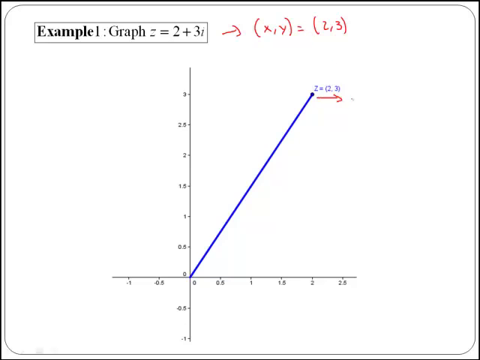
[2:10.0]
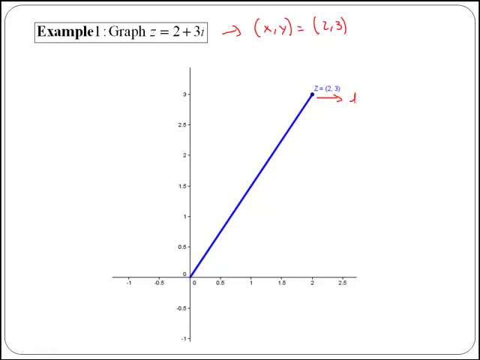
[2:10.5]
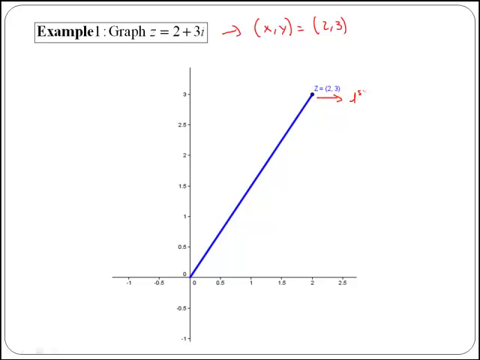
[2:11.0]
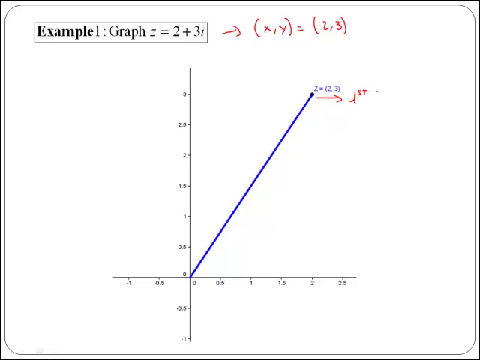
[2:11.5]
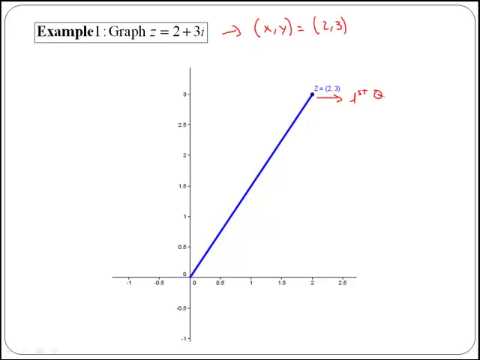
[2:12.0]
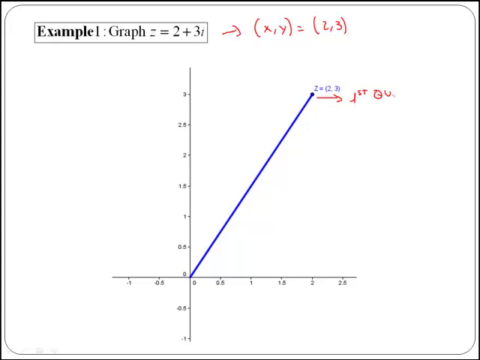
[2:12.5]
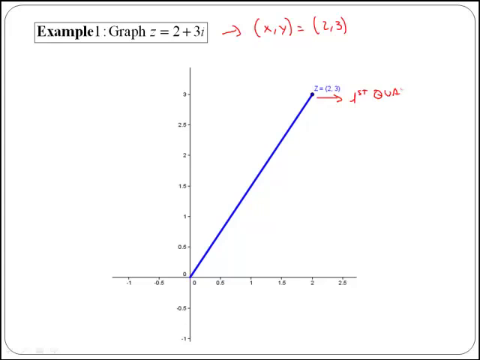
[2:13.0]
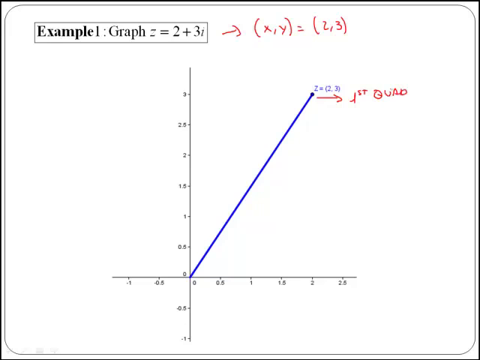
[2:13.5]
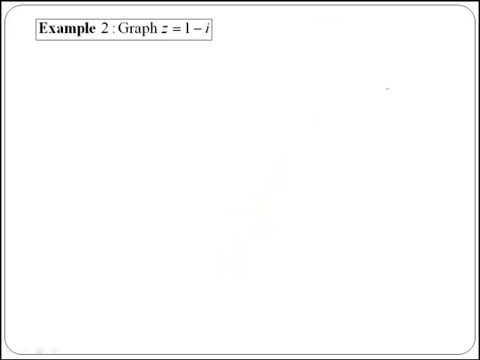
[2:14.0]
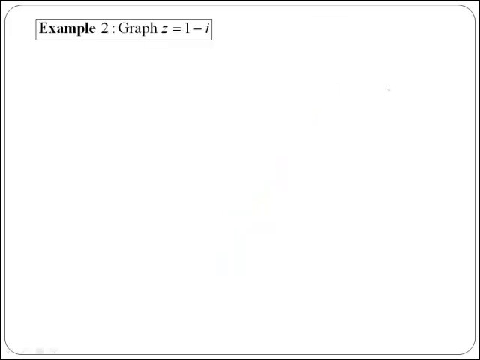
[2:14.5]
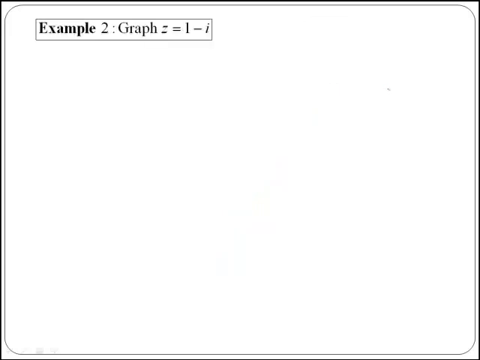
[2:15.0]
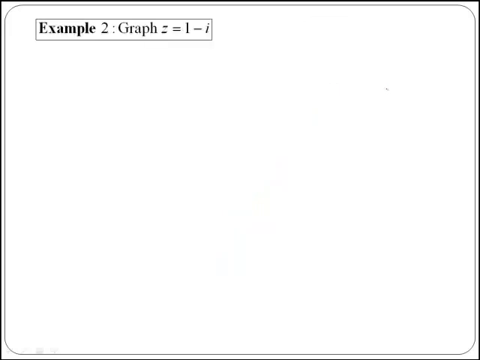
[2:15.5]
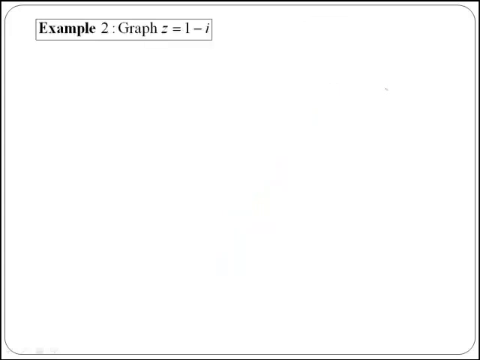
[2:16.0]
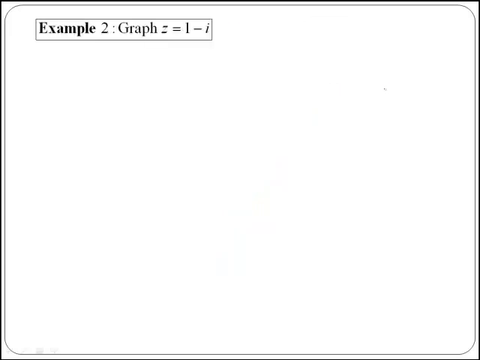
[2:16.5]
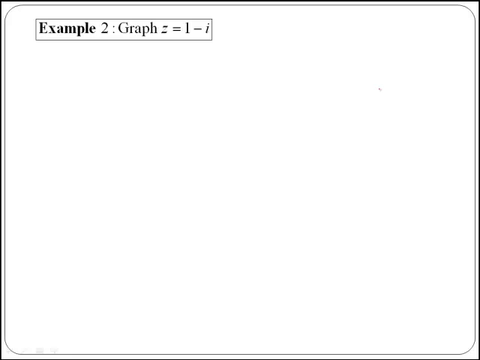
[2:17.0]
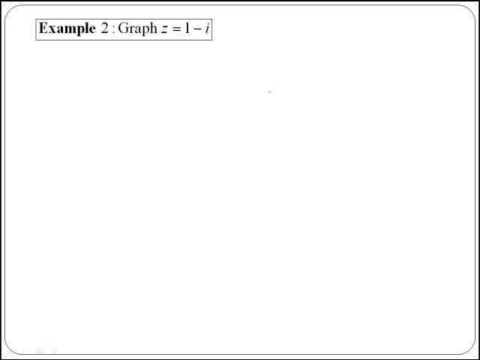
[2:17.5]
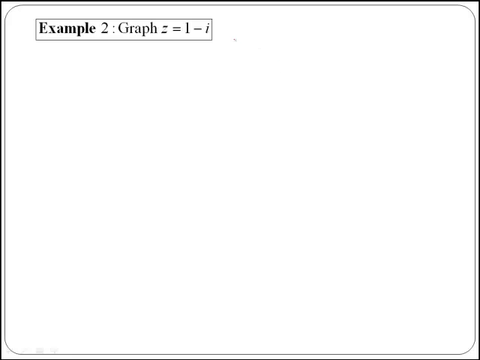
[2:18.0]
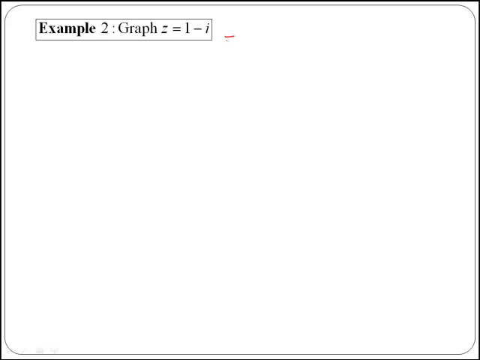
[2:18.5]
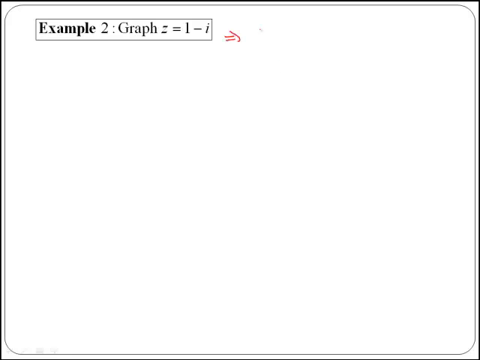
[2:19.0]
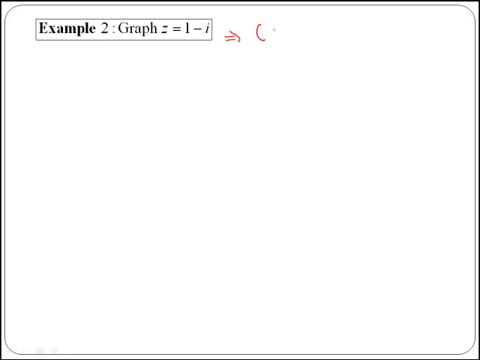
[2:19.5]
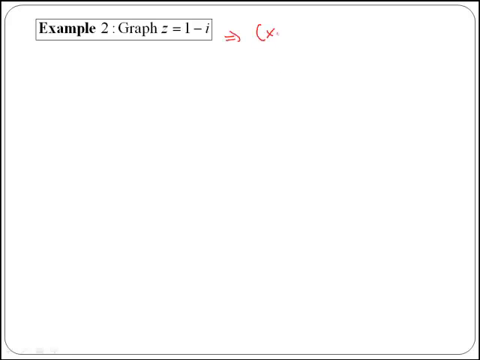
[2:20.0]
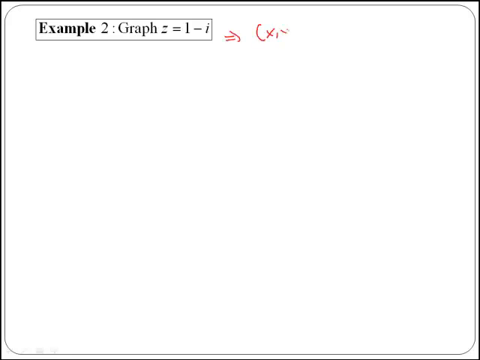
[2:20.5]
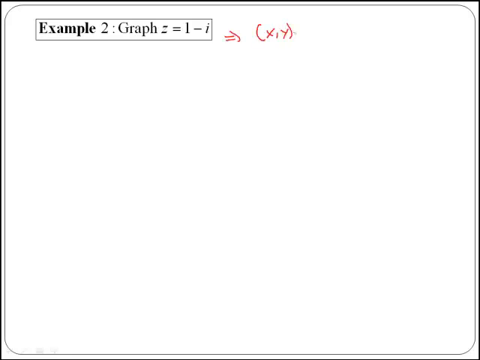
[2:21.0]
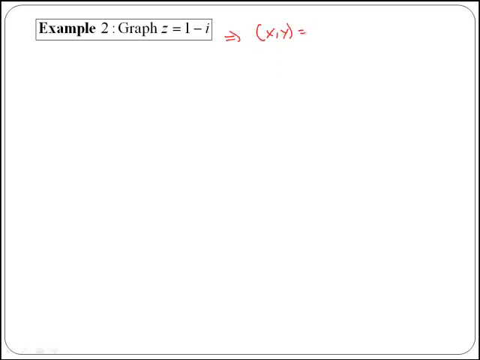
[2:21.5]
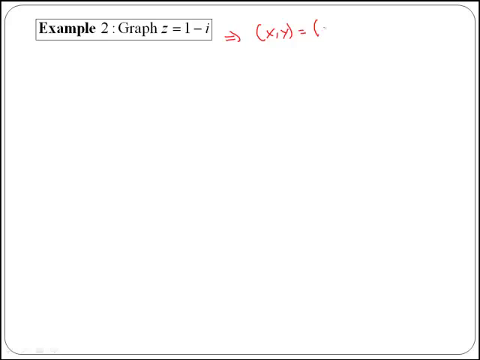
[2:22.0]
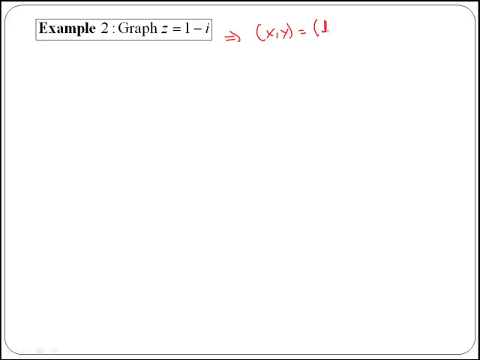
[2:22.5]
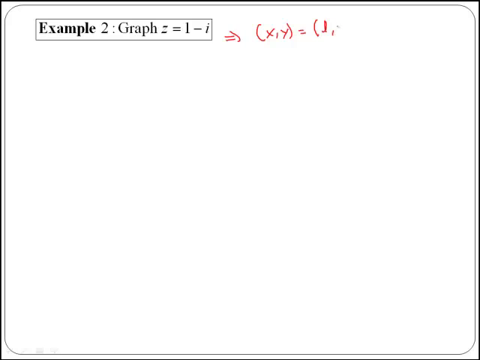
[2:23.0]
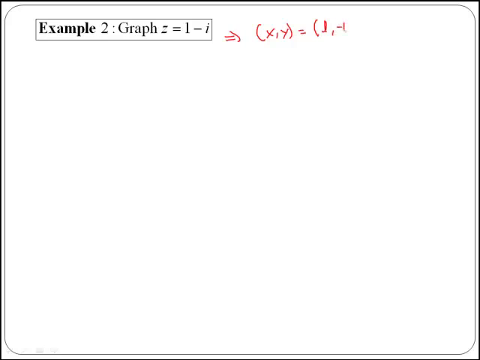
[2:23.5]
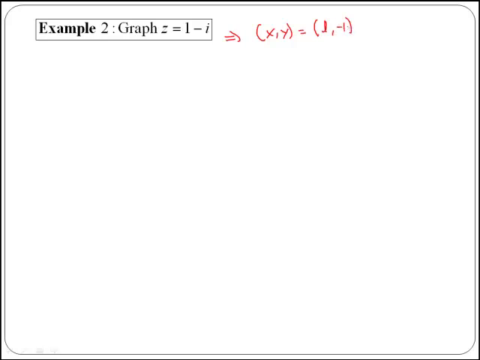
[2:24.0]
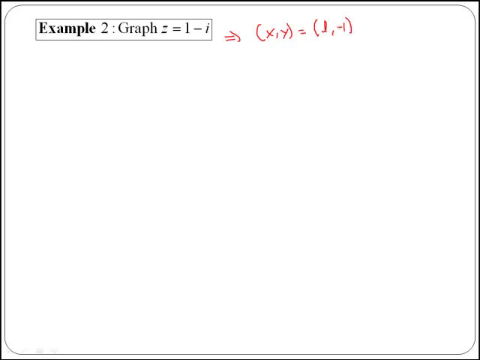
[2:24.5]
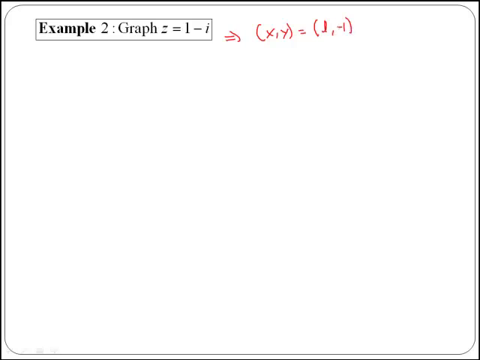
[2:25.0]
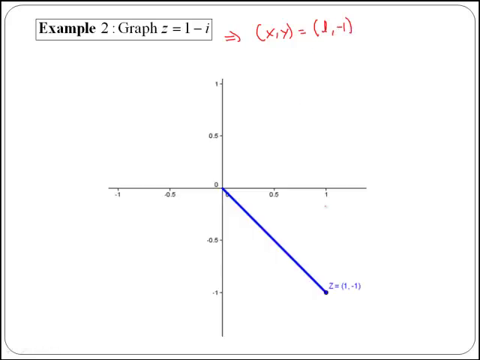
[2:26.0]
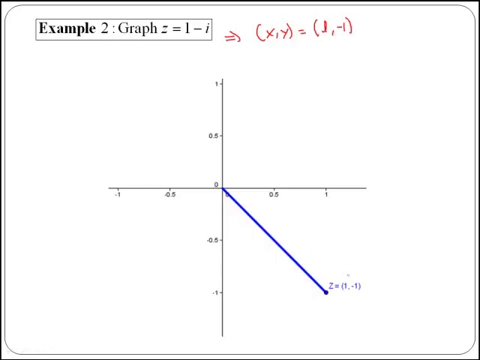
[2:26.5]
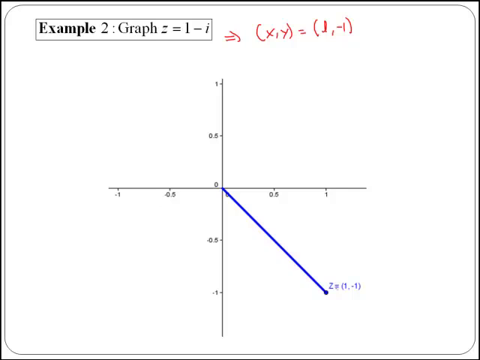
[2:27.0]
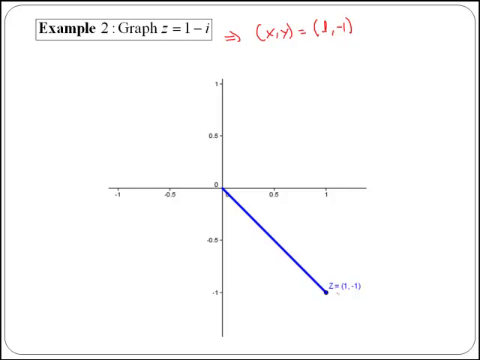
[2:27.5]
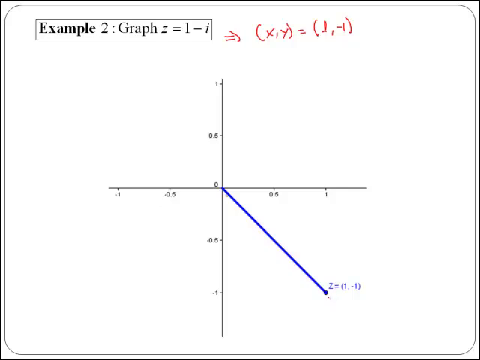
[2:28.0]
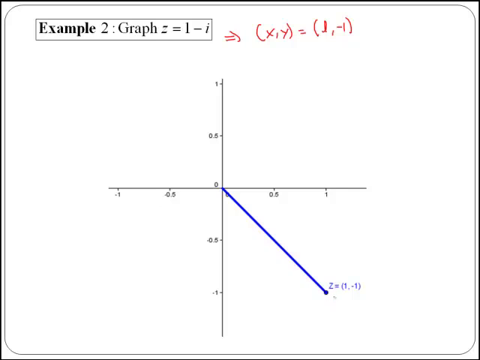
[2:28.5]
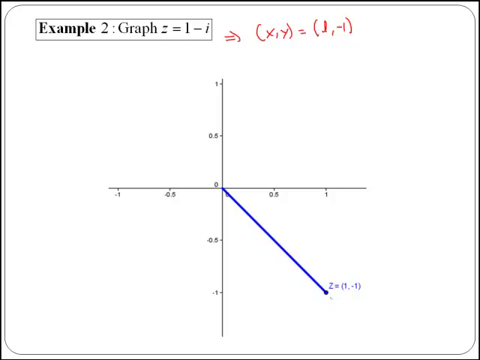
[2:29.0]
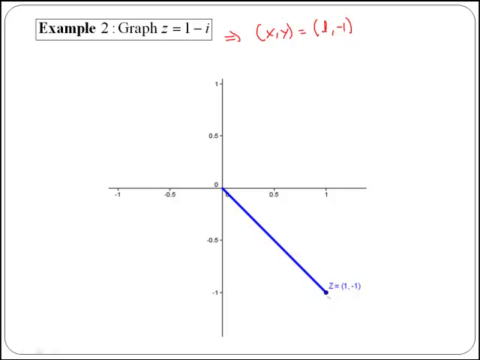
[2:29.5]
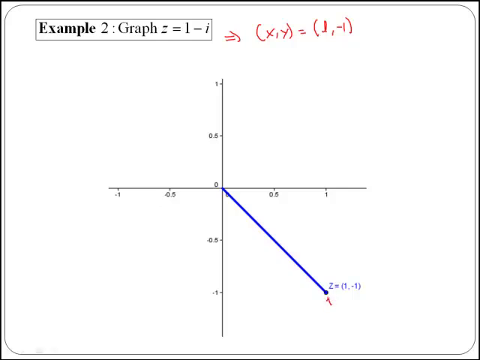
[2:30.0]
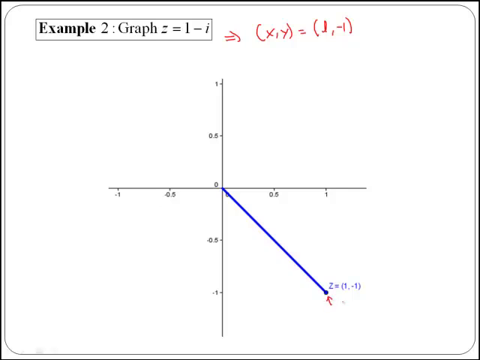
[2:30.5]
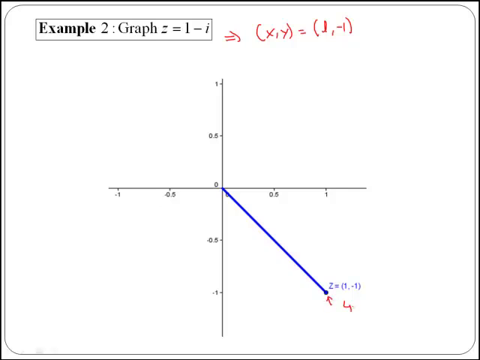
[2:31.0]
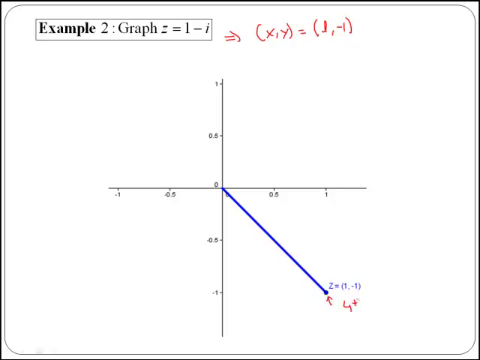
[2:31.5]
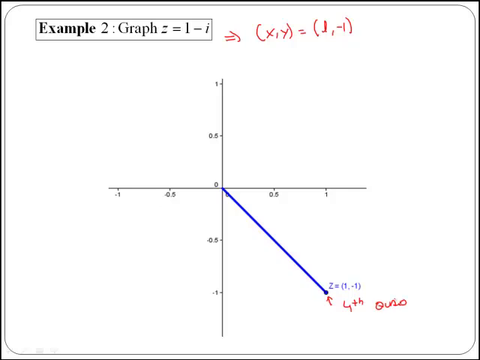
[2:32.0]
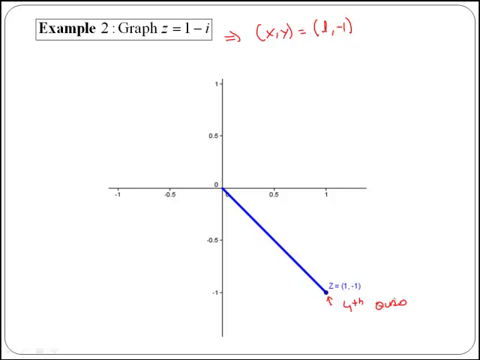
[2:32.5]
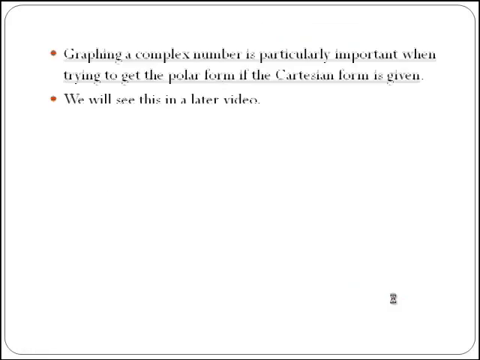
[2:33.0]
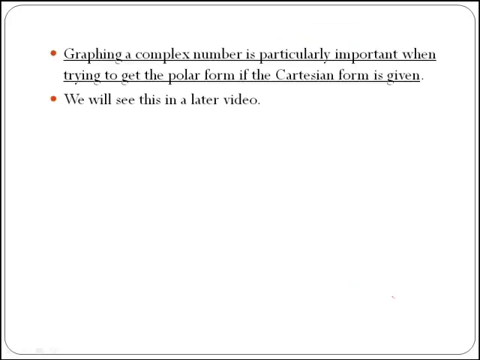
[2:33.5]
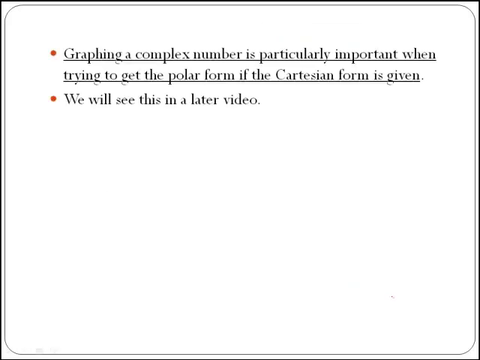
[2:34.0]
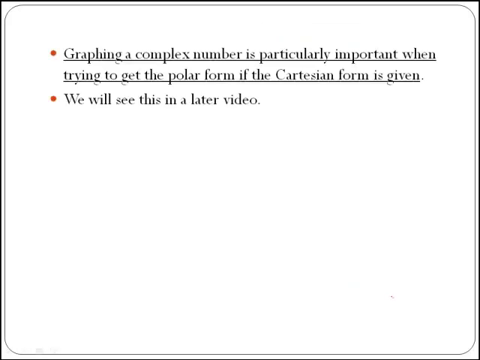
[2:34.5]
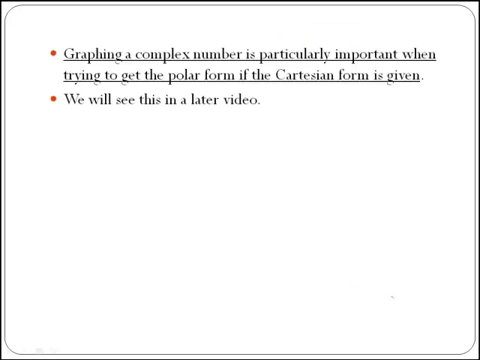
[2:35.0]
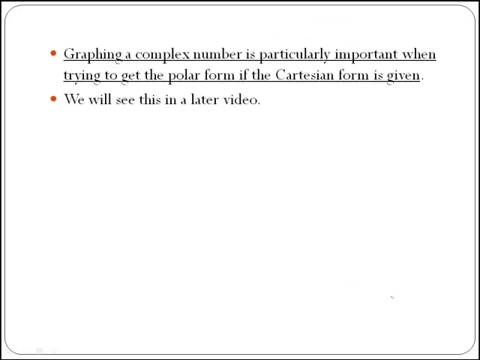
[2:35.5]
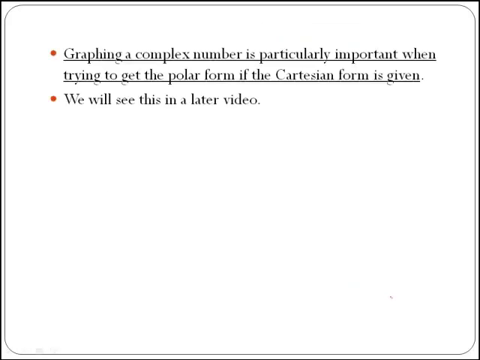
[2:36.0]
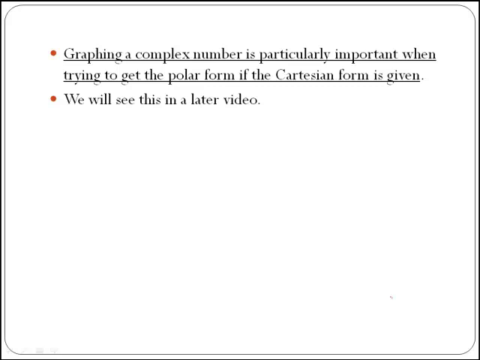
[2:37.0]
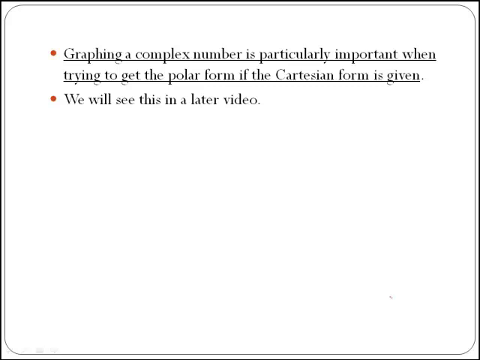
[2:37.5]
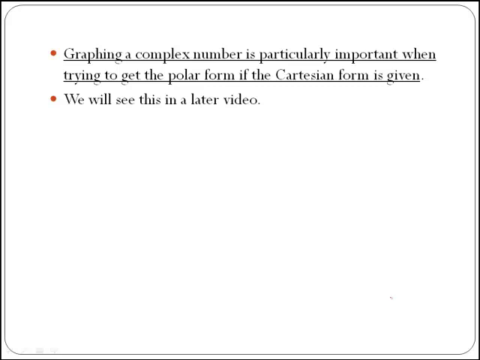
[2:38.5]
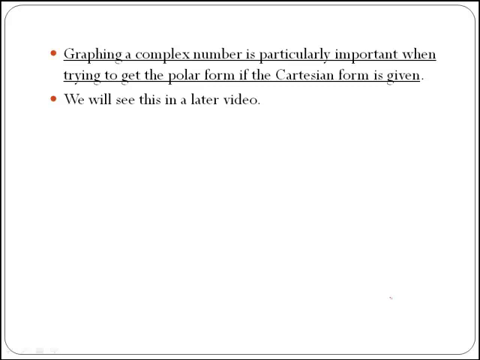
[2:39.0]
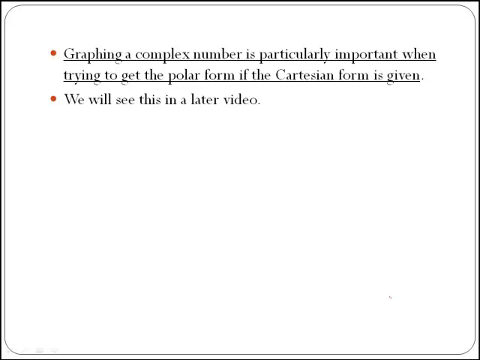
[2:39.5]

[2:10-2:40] The white slide with a gray border shows the gray outline box with "Example" and a big bold "1," and "graph z = 2 + 3i." In red lettering, with a sloppy arrow, she has written "(x, y) = (2, 3)." The black graph has vertical and horizontal lines meeting at zero; up is positive and down is negative, left is negative and right is positive. The line goes to 2 on the horizontal and up to 3. She then starts drawing an arrow pointing right and writes something very fast that is hard to read. The next screen, again white with a gray border, reads "Example" with a big bold "2" and "graph z = 1 - i." The presenter writes two lines and a sloppy half-triangle shape meant as an arrow, then writes "(x, y) = (1, " followed by what is apparently a negative one, though it is hard to tell. A graph then appears with the horizontal and vertical lines meeting at zero; up is positive, down is negative, left is negative and right is positive. A blue line starts at zero and goes down to the right, stopping at 1 on the horizontal line and at negative one on the vertical line. Some red lettering appears very quickly, then the video jumps to a bullet-point slide about the graphing of complex numbers, where the first bullet is now underlined and bolded, followed by a second bullet point.